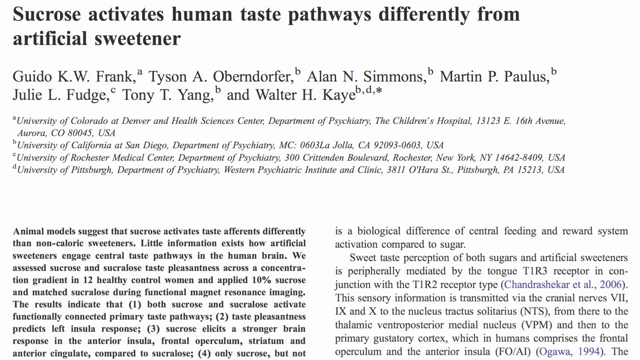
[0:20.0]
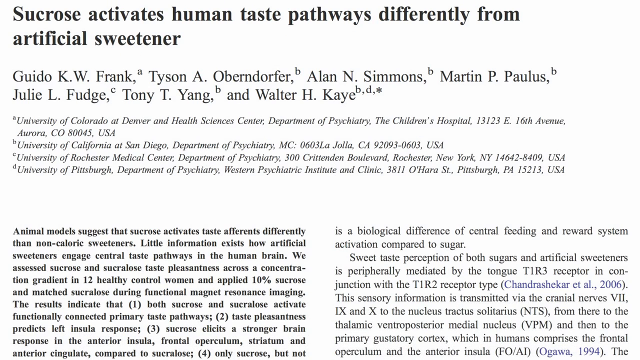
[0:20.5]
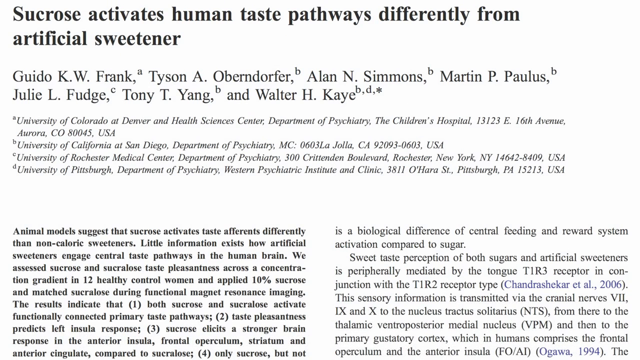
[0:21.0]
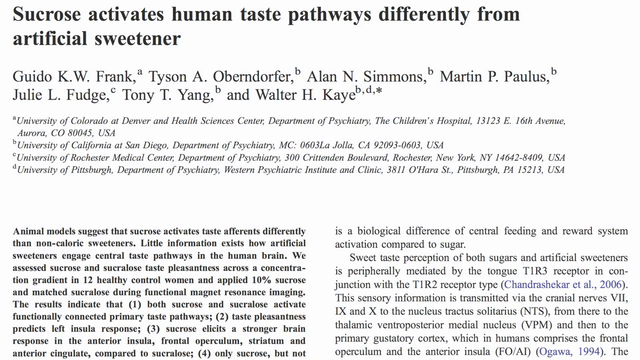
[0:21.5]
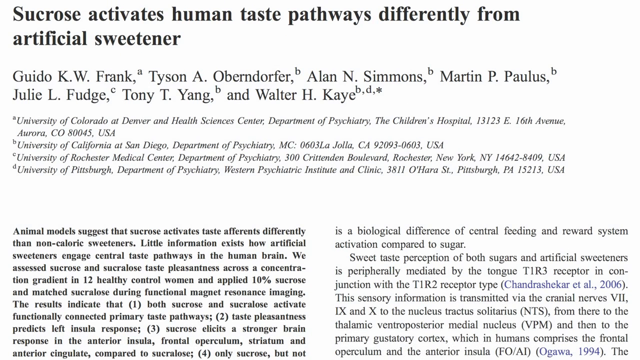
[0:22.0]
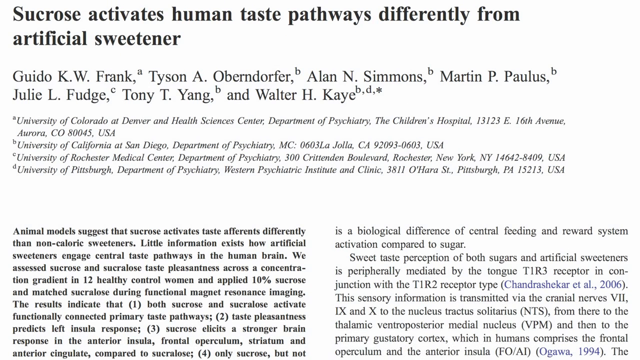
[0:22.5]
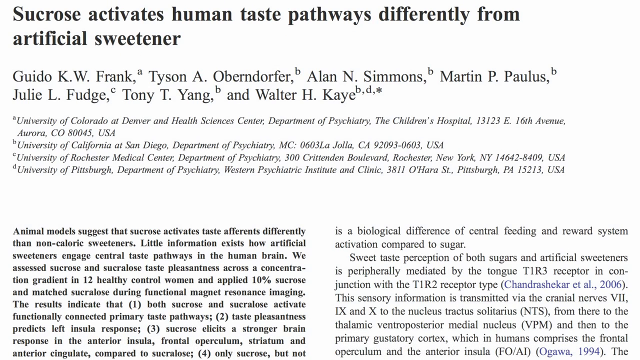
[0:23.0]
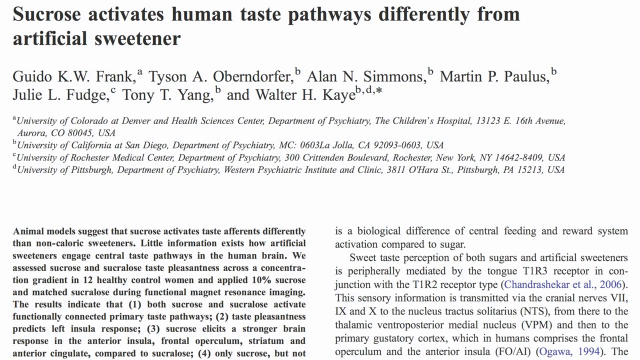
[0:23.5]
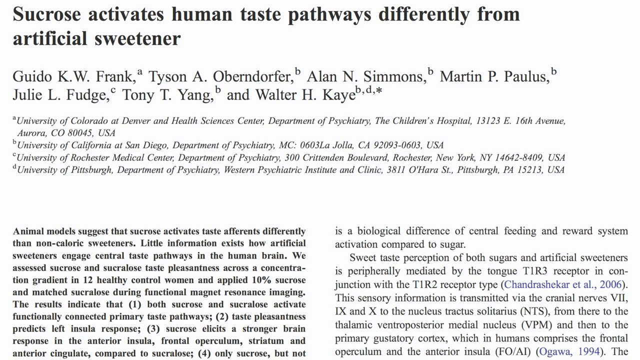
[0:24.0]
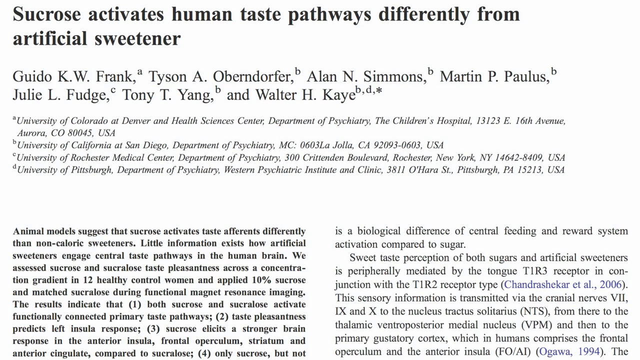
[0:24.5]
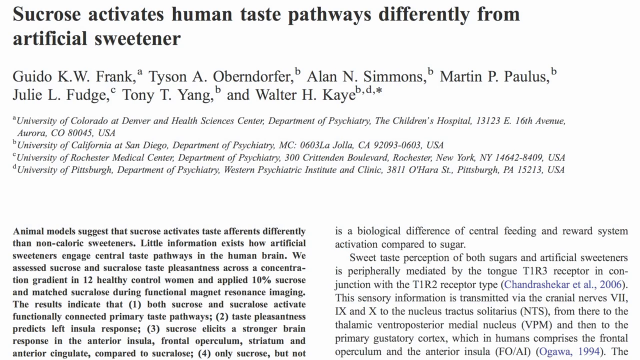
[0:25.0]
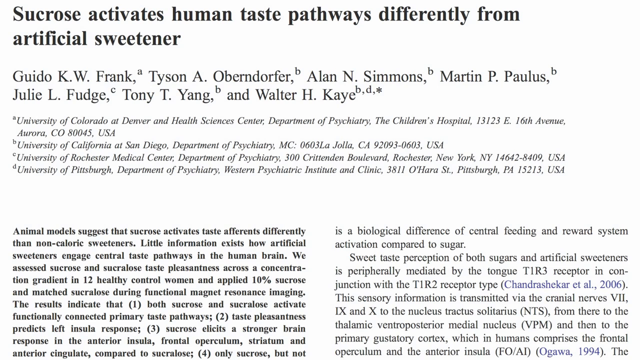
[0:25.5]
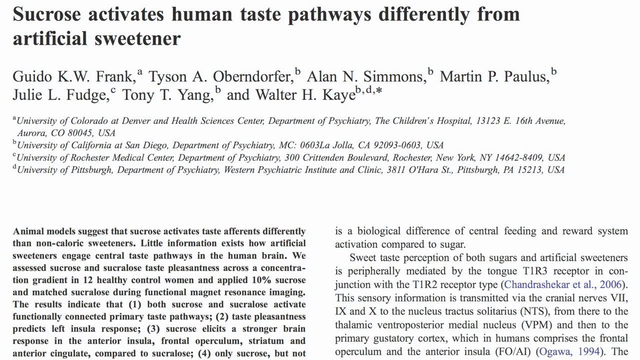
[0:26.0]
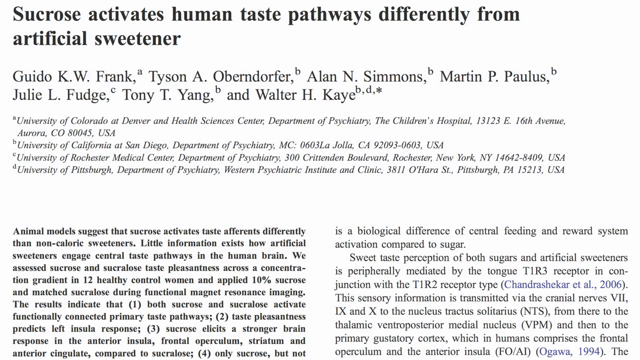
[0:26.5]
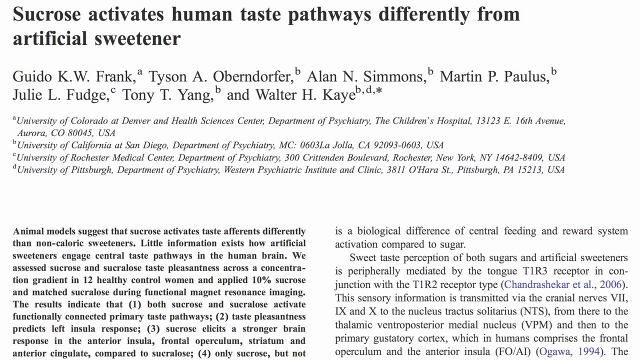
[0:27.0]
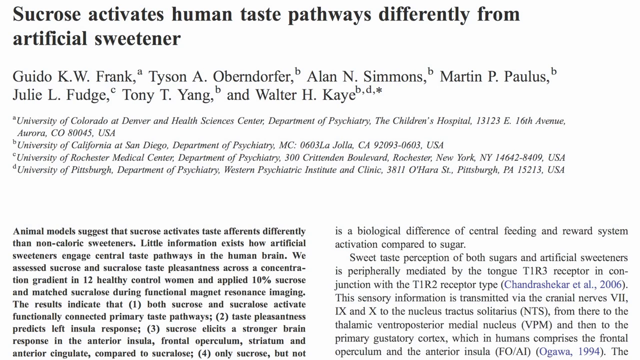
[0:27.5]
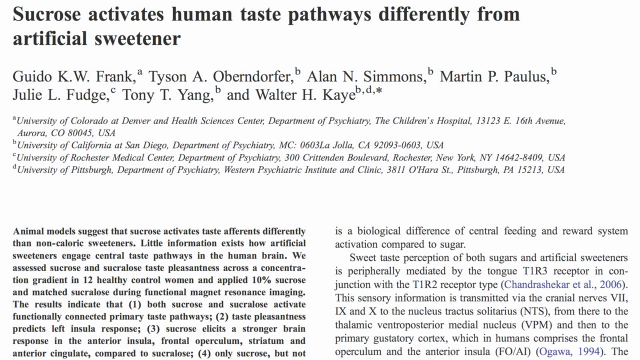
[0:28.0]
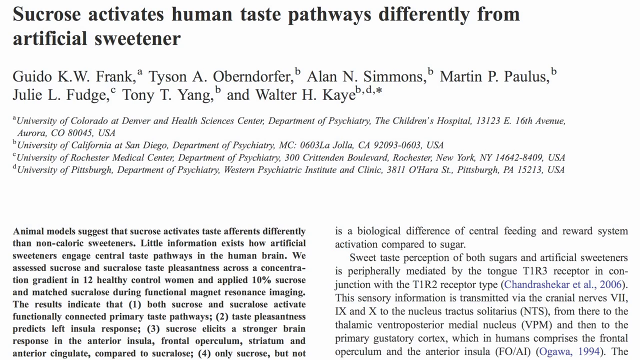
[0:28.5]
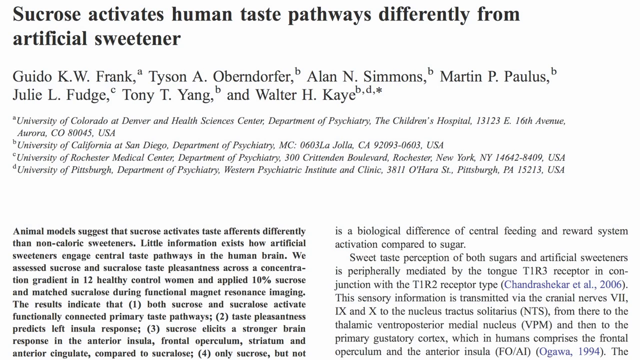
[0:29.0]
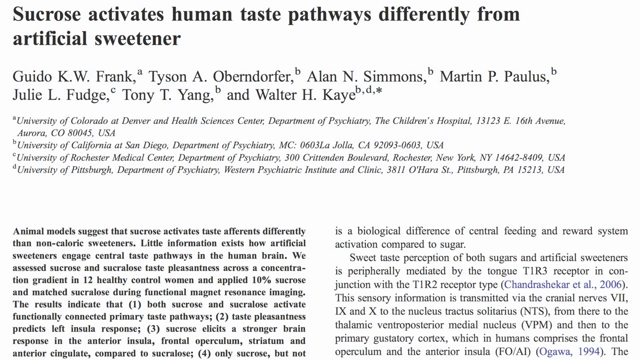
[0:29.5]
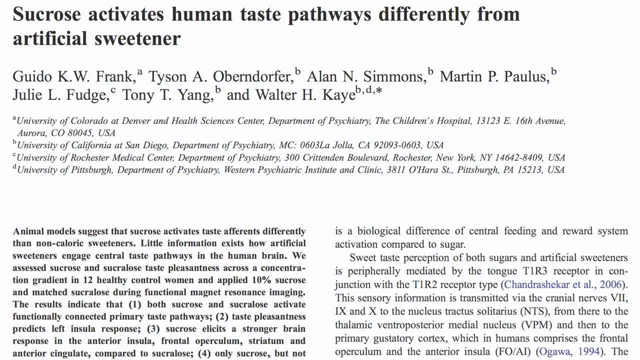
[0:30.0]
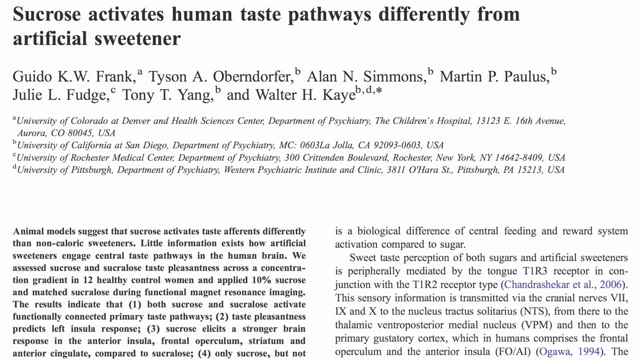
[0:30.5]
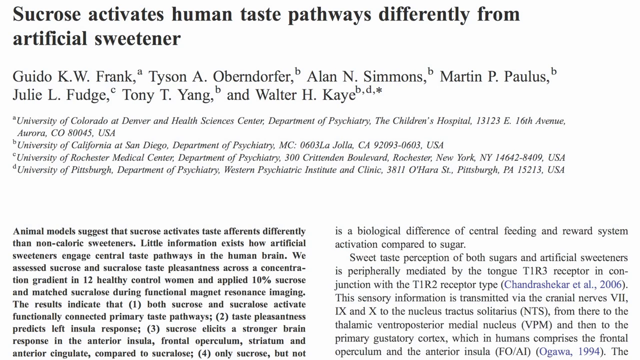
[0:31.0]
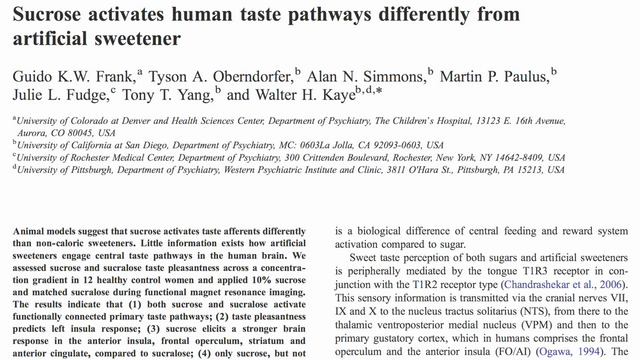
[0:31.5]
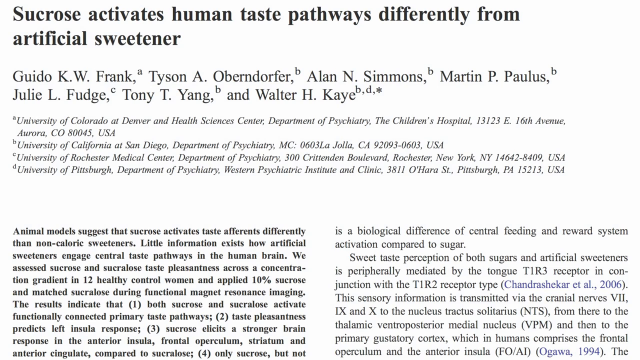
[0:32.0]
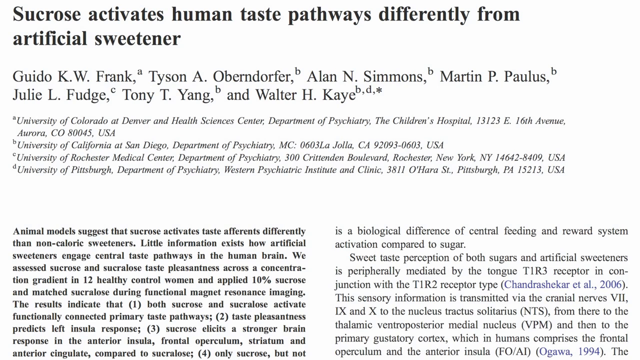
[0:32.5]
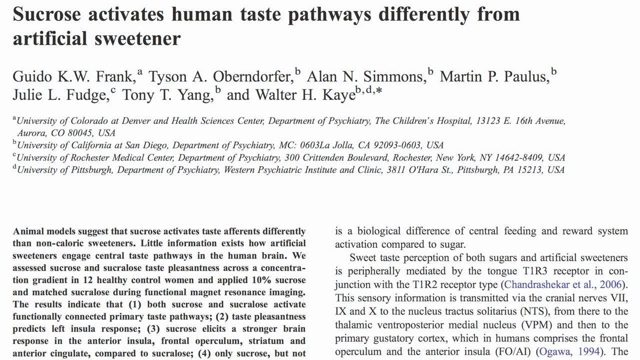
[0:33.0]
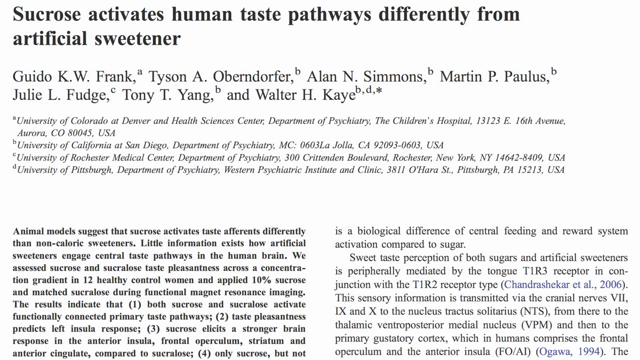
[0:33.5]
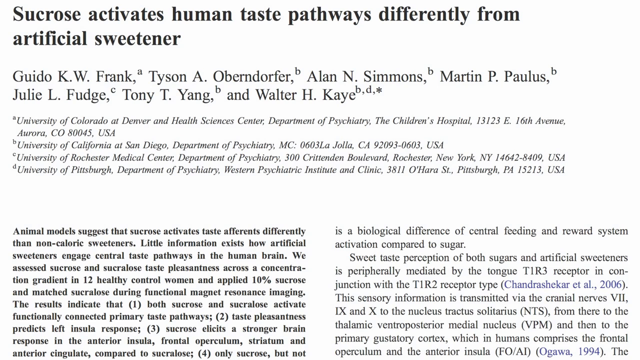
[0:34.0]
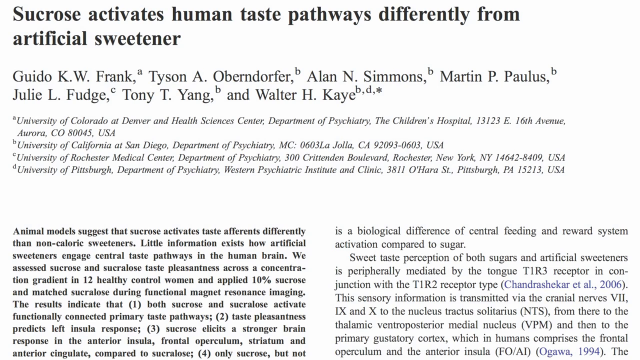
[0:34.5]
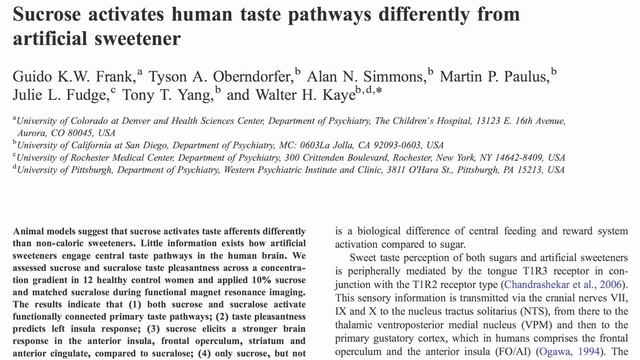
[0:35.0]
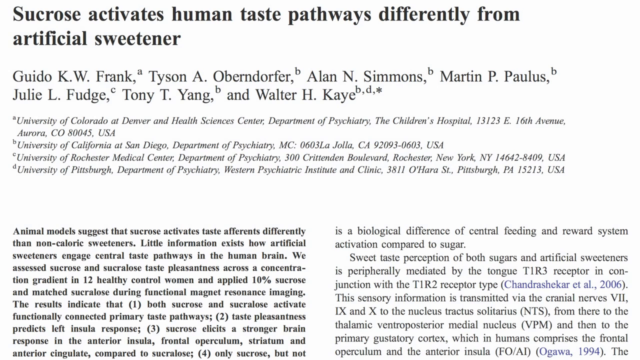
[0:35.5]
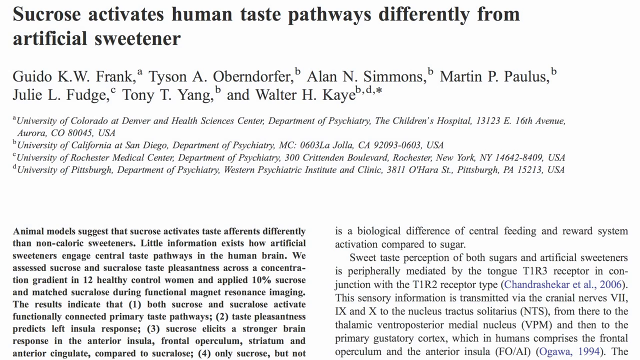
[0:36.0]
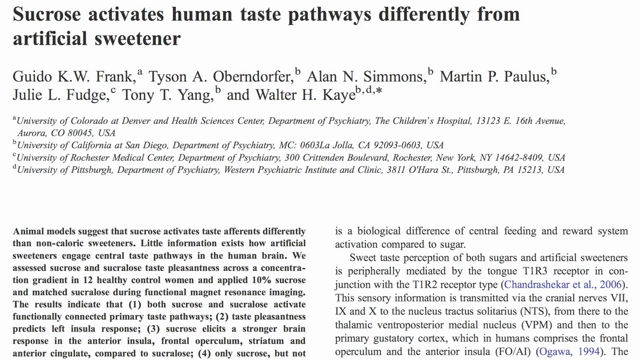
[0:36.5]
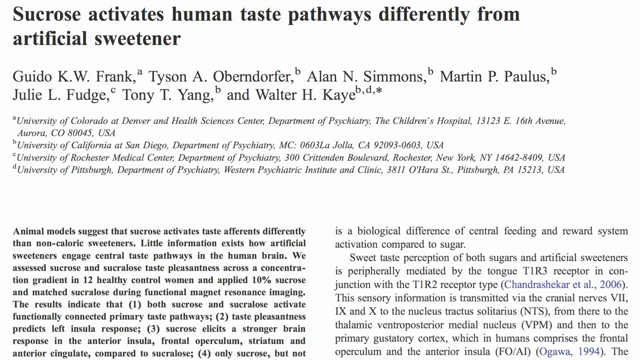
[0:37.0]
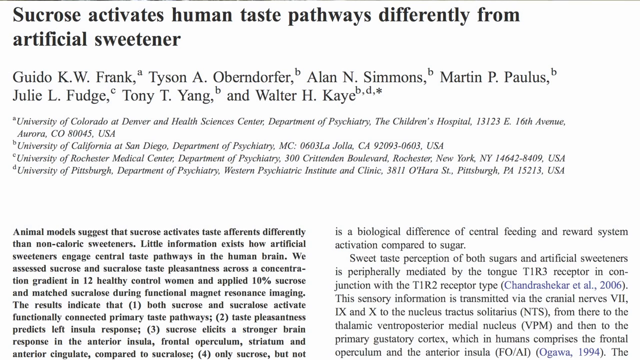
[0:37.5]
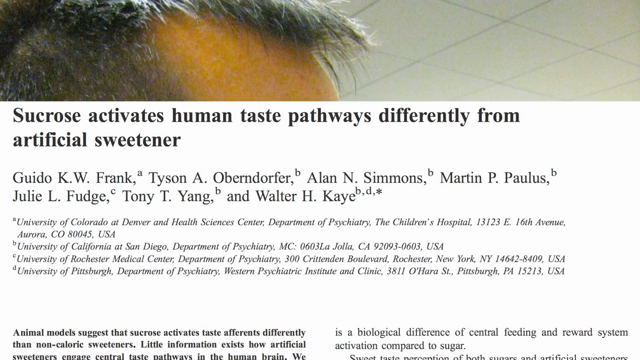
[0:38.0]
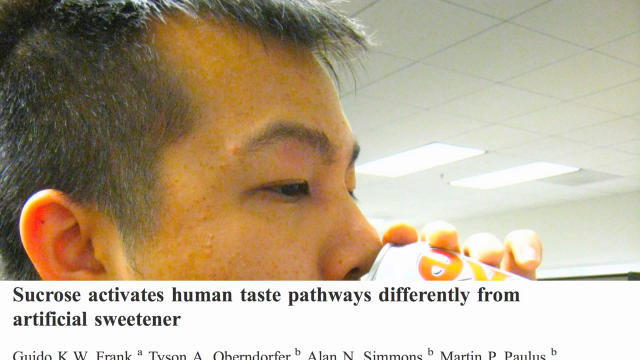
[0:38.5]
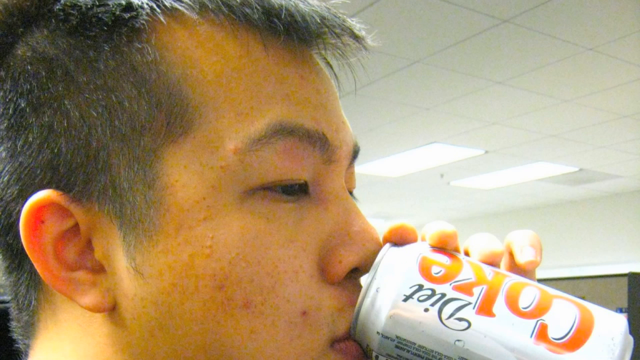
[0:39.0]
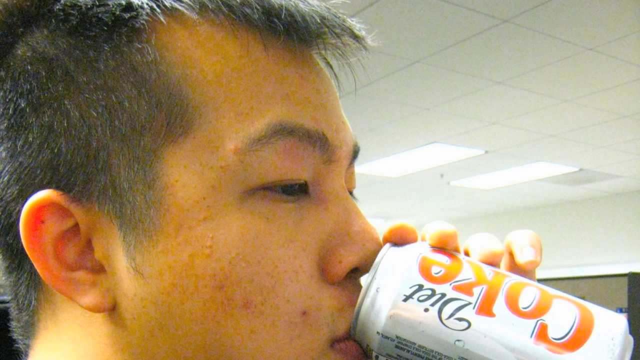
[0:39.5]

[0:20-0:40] An article titled "Sucrose activates human taste pathways differently from artificial sweetener" appears, its text in black on a white background. The first page reads "America's obesity epidemic has gathered much media attention recently. A rise in the percent of the population who are obese coincides with an increase in the widespread use of non-caloric artificial sweeteners, such as aspartame, for example, in Diet Coke, and sucralose, for example, in Pepsi One, in food products." The text then blurs out, beginning with a sentence about people often choosing diet or light products to lose weight. The screen switches to another page of the article, which is mostly illegible; it has a list of the authors' names under the article's title, and its text continues about artificial sweeteners, particularly how sucrose activates human taste pathways differently than artificial sweeteners.